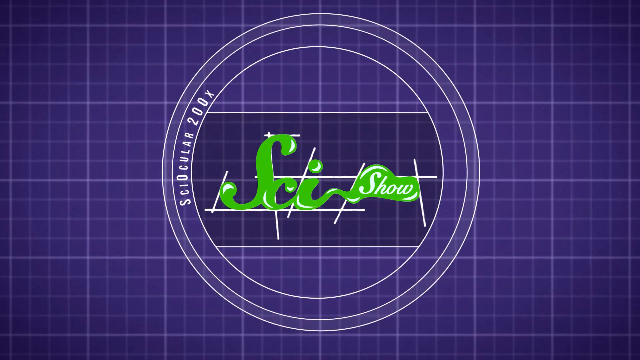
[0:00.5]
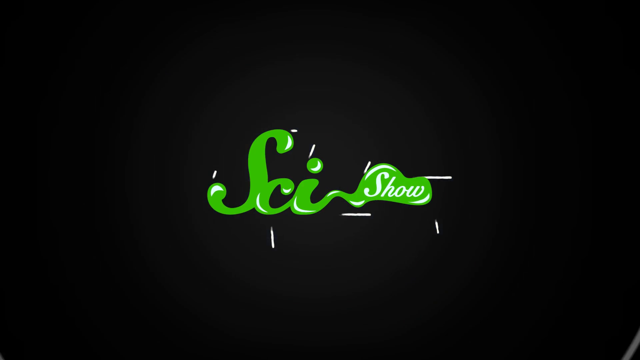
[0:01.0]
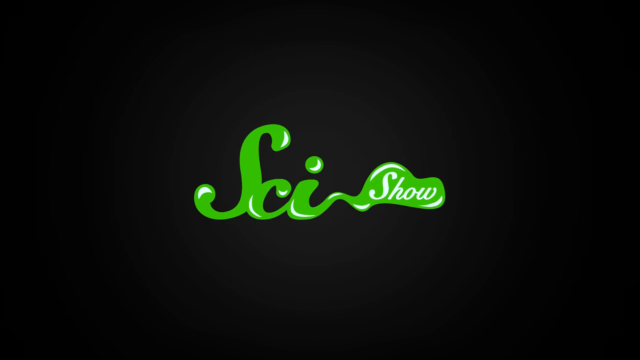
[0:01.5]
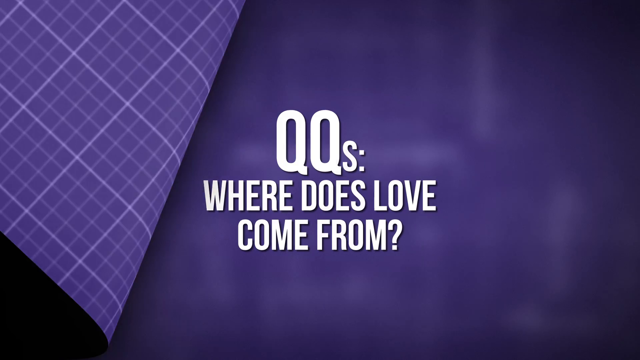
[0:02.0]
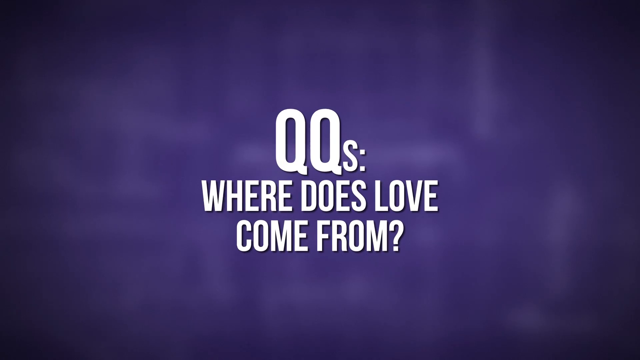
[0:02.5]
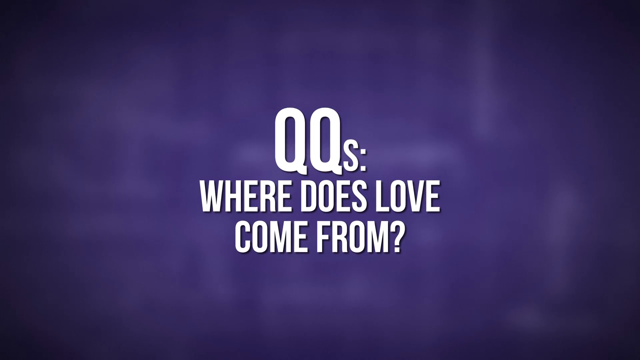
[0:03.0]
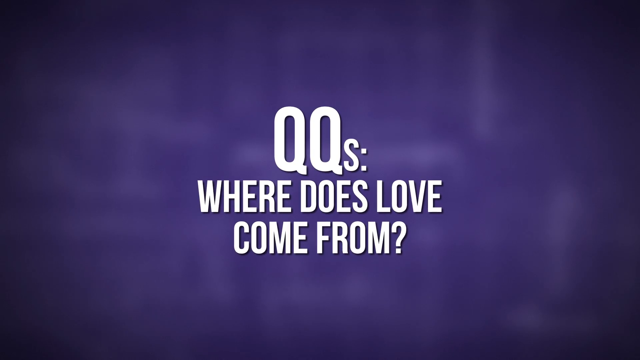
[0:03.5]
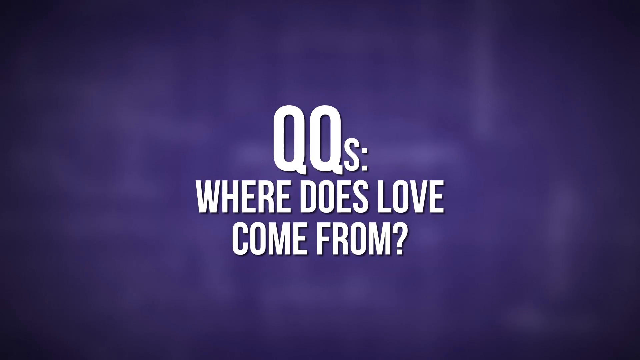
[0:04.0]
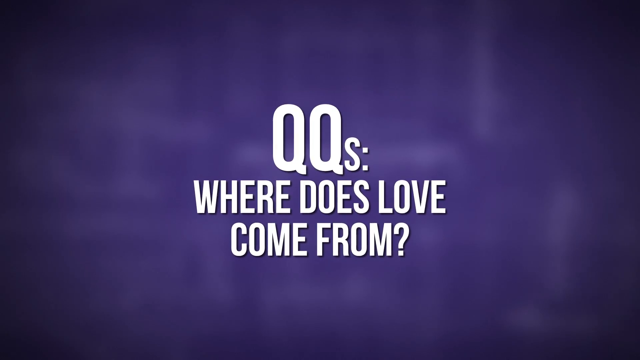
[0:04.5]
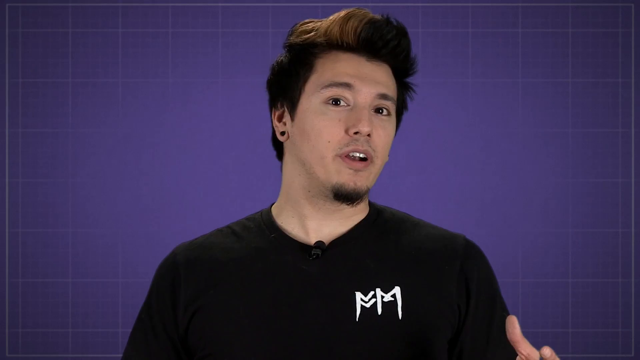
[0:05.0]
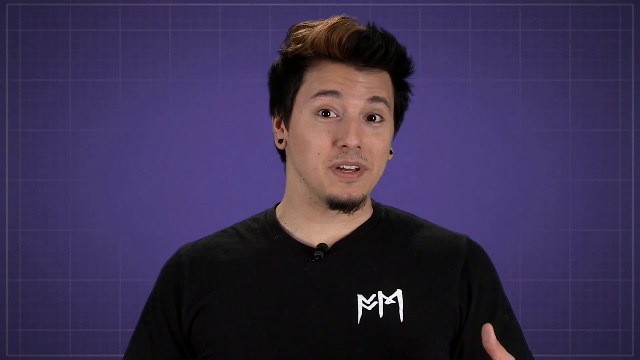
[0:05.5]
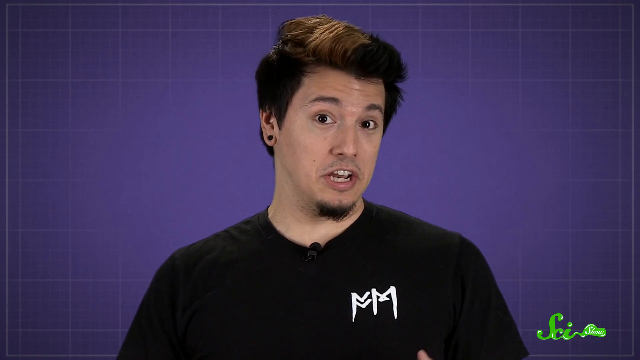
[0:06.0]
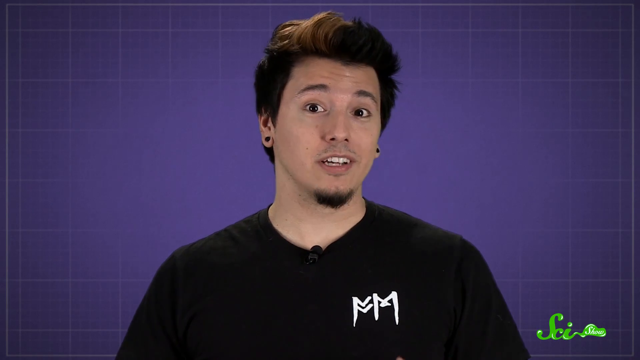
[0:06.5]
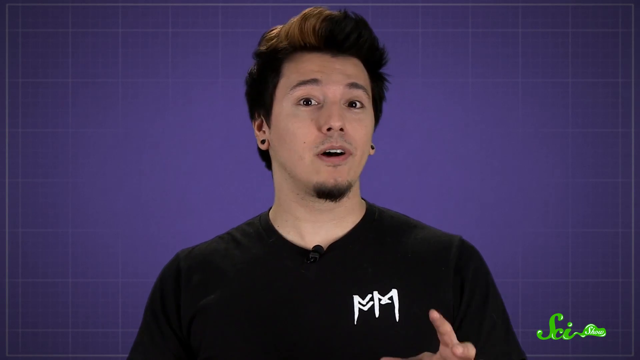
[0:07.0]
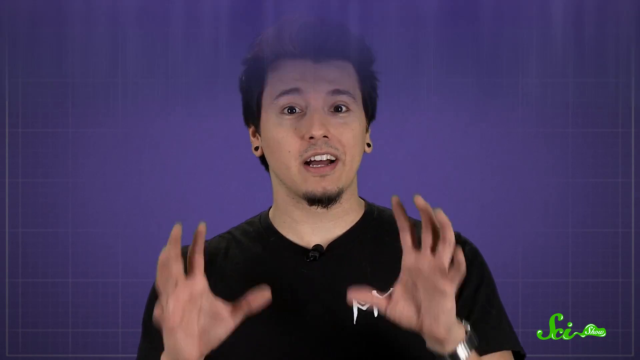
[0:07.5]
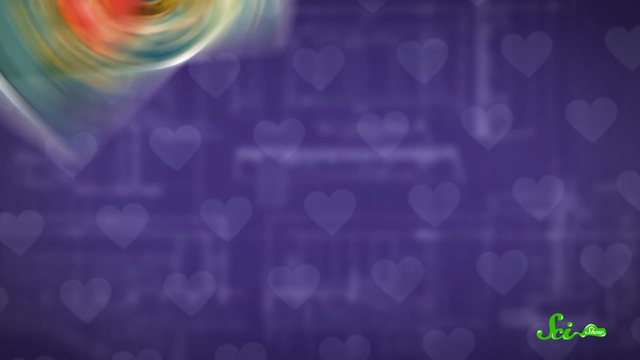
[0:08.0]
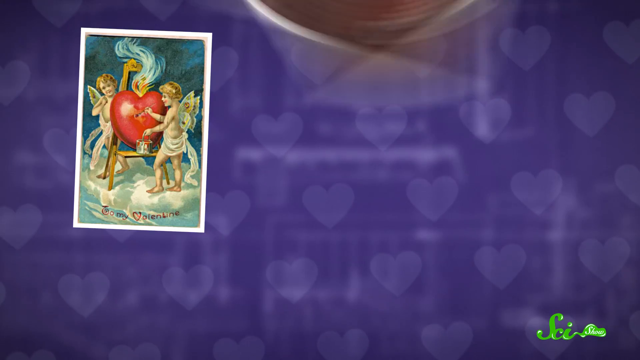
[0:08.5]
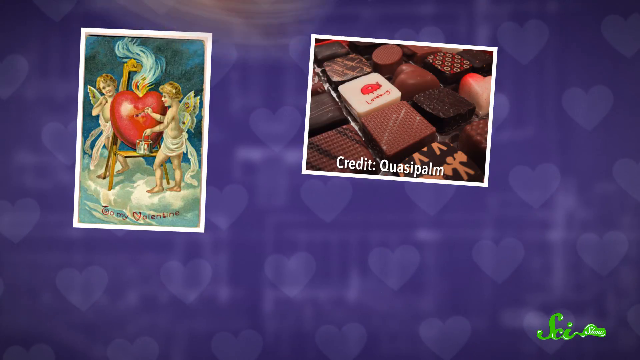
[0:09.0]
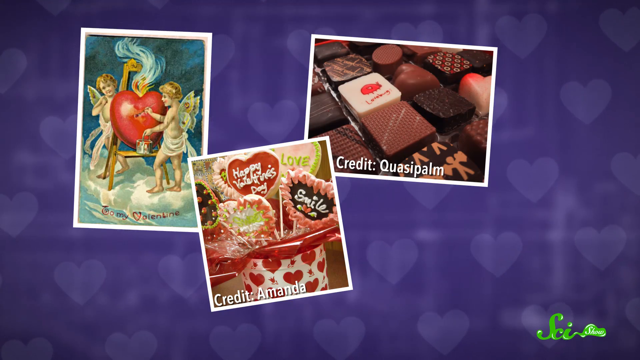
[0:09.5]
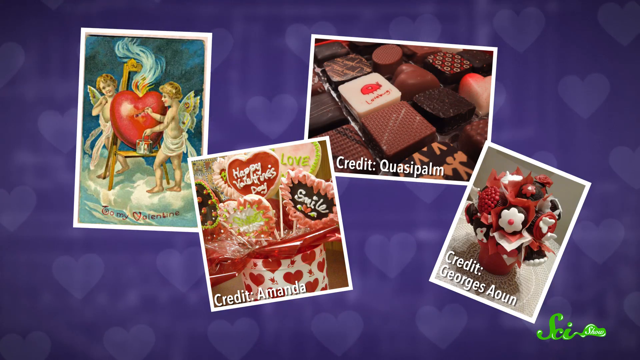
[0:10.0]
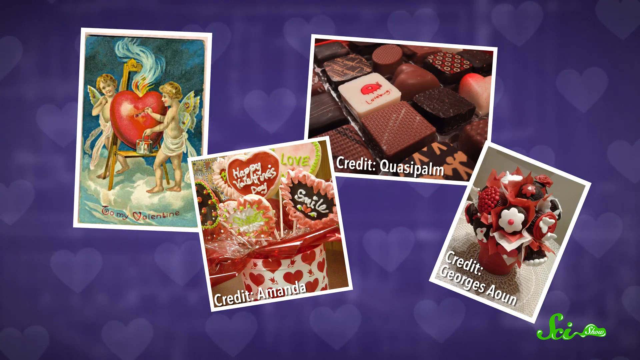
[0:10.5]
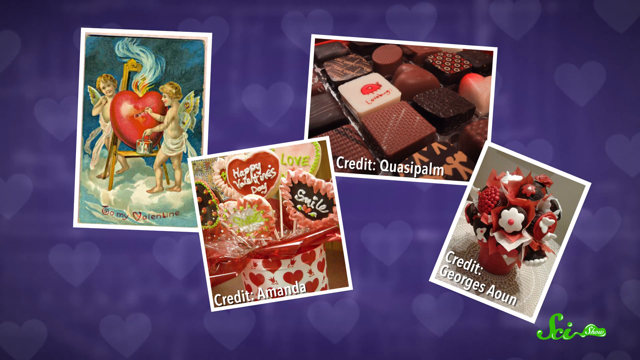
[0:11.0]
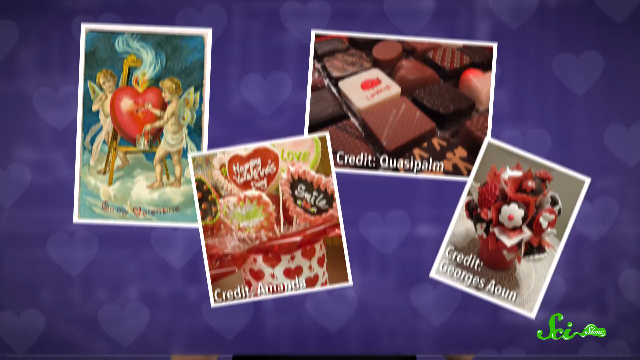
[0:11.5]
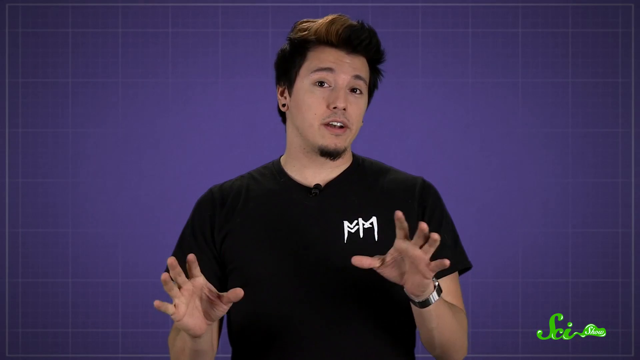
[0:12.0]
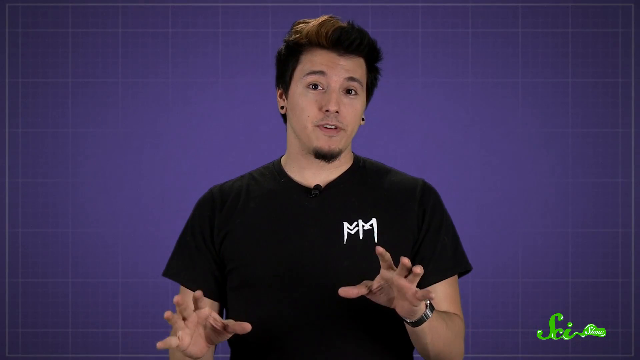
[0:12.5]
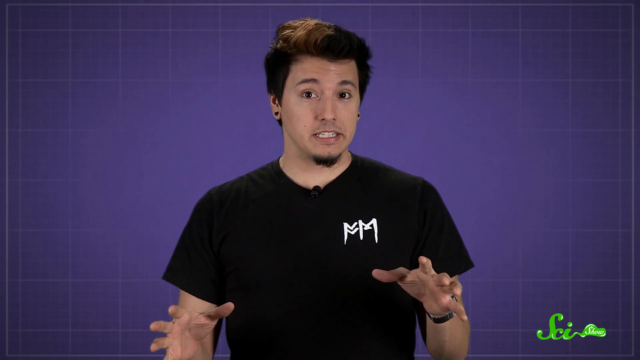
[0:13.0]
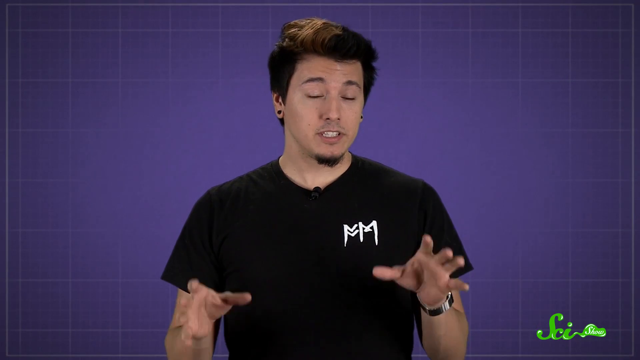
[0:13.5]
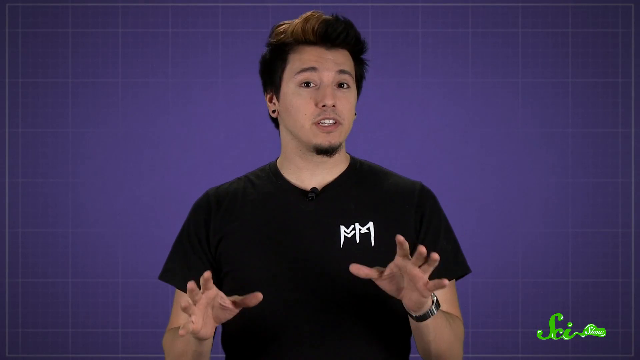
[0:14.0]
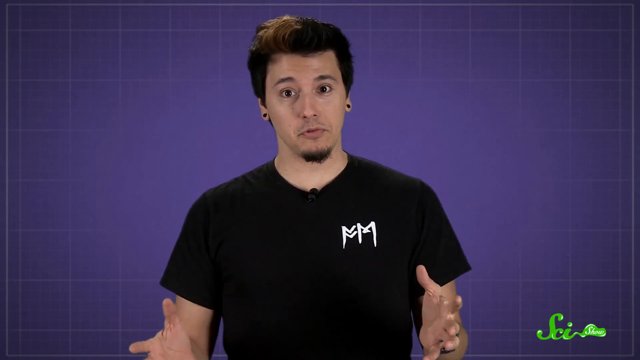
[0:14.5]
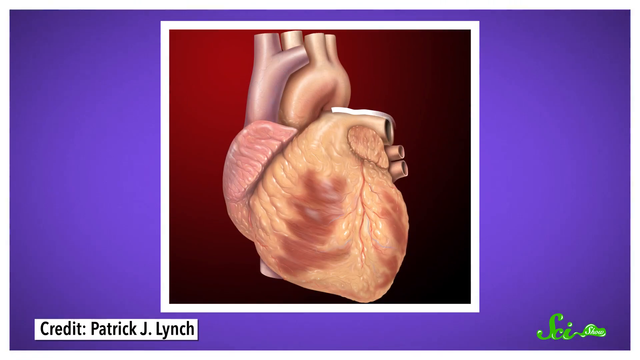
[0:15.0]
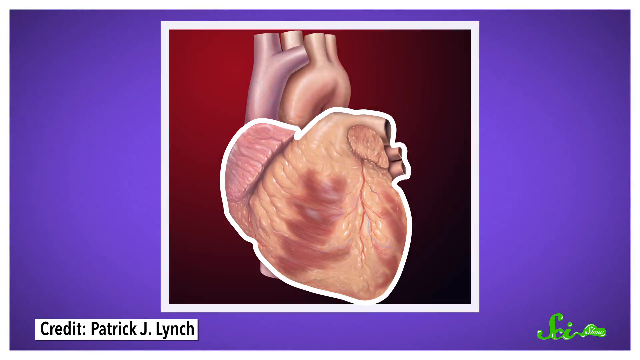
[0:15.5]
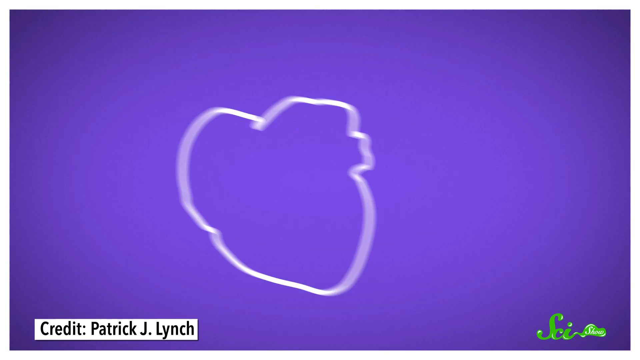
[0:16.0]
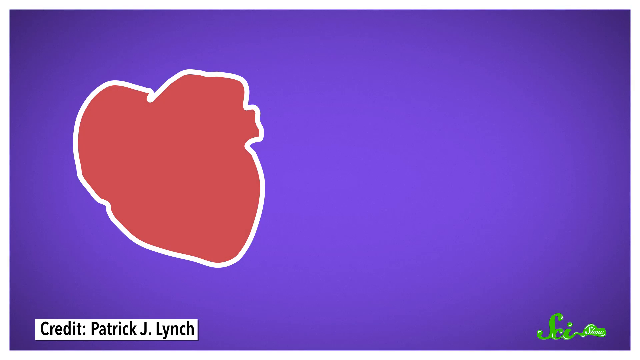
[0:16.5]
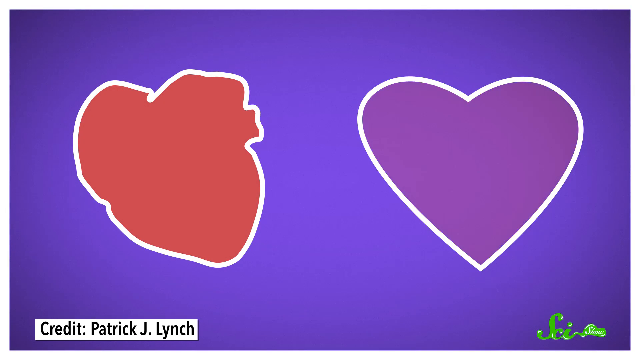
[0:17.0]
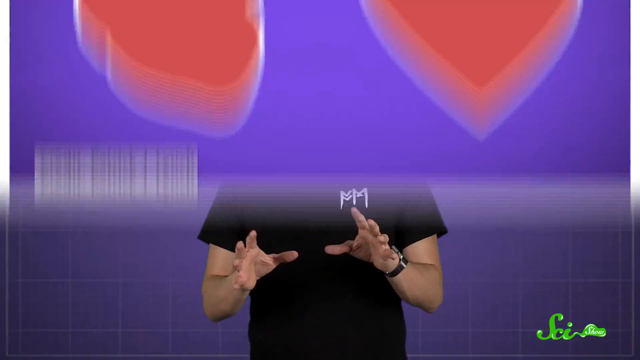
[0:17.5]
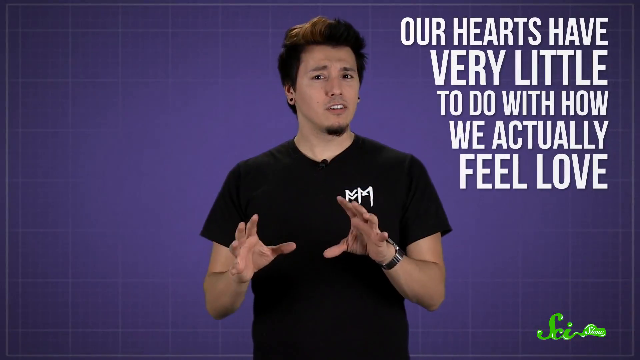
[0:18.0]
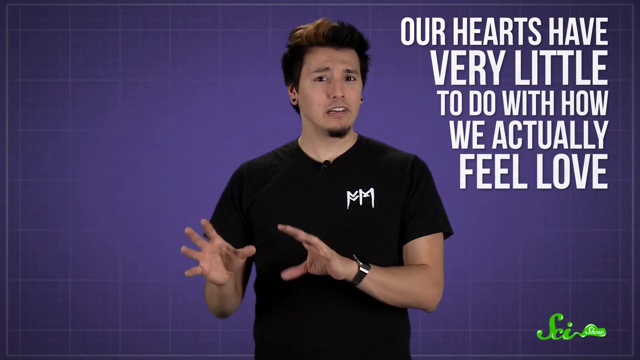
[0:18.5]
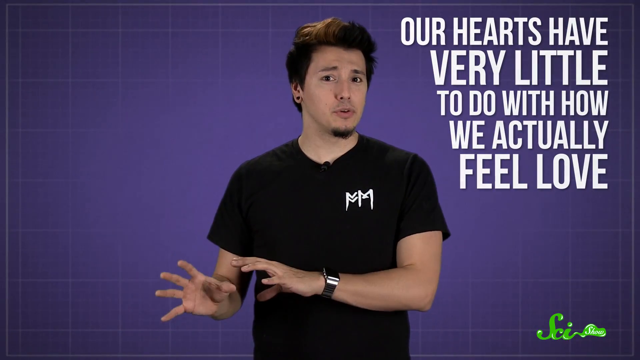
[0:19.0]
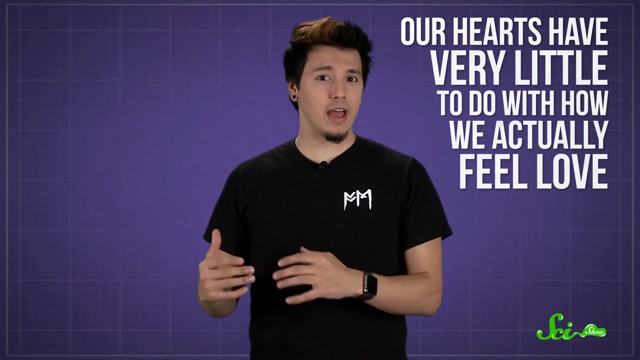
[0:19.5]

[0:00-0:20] An introductory green screen shows "SCI Show" in green on a green grid-like background. The screen then transitions to a purple screen with white text: two large capital letter Qs followed by a small letter s and a colon, and below that, "where does love come from?" Next, a young man with thick, dark hair appears. His hair is cut in a high top style and tapers slightly from the top down to his ears, and he has some brown highlights in the parting. He has a small goatee and wears black earrings, and he is speaking. Next, a purple background with small pastel purple heart shapes appears, along with four different images on love themes, such as chocolates, fruit baskets and Cupid poking an arrow into a heart; this stays on screen for about three seconds. The young man is then seen speaking again. He wears a black T-shirt with what looks like two white letter Ns on it, and he gestures with his hands as he speaks. Next, a graphical illustration of a human heart appears. The heart is outlined in white, then the heart disappears, leaving the white heart-shaped outline on a purple background. The white outline slides to the left side and fills with red, and on the right side a digital illustration of a cartoon-like heart shape pops up. The screen then slides upwards and disappears in a transition.